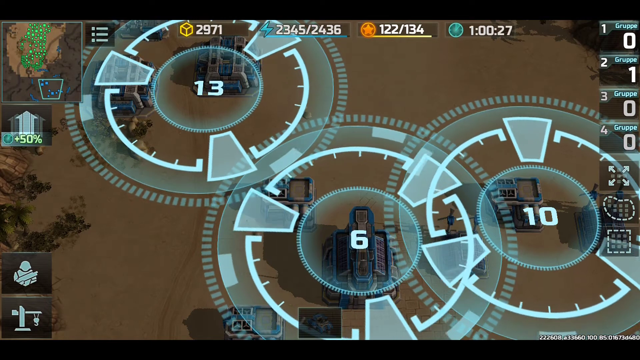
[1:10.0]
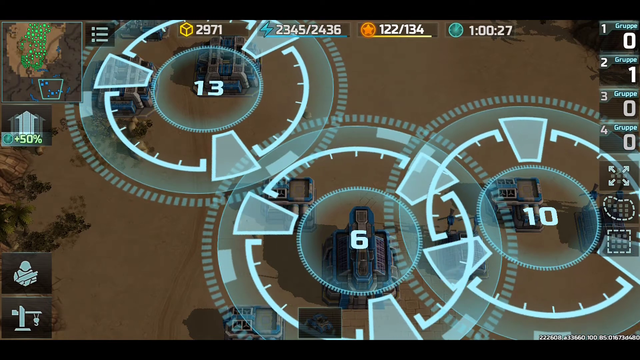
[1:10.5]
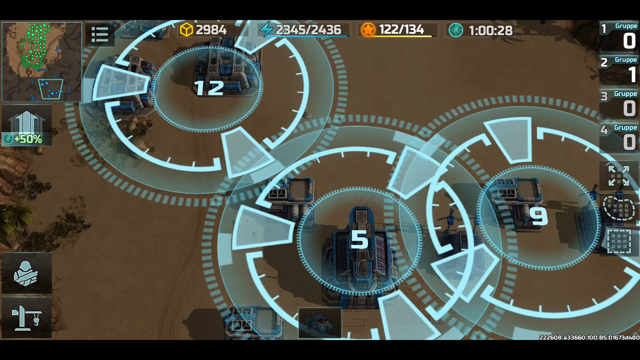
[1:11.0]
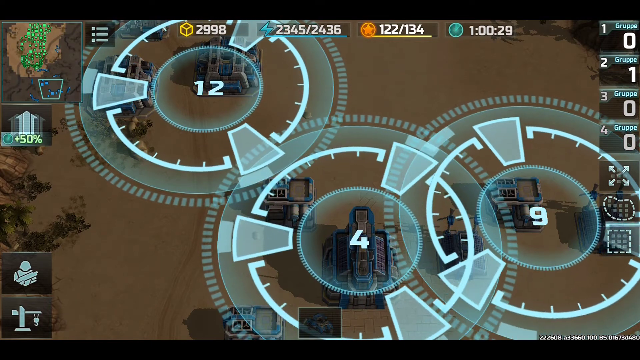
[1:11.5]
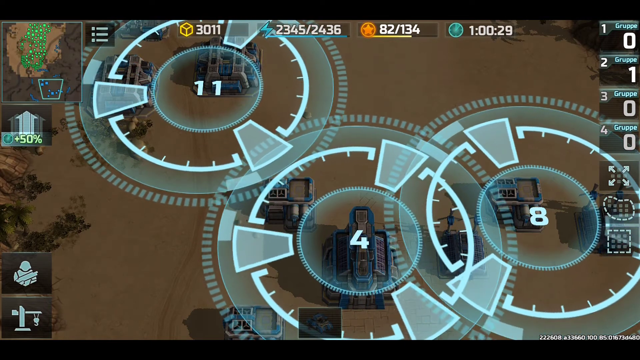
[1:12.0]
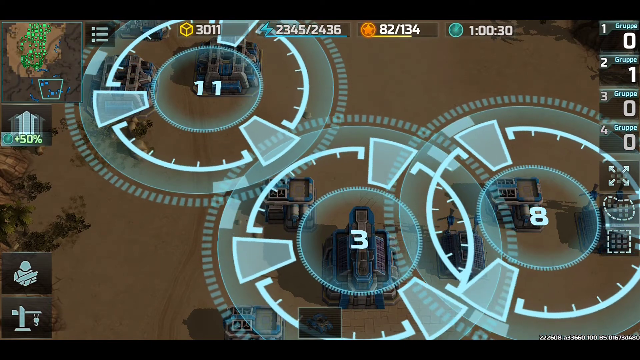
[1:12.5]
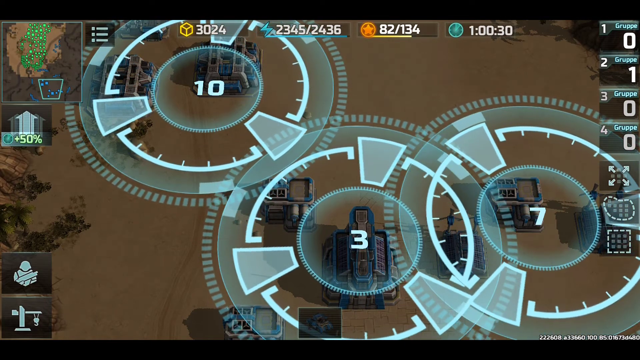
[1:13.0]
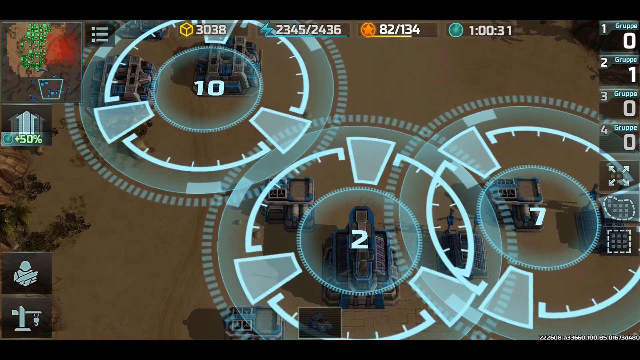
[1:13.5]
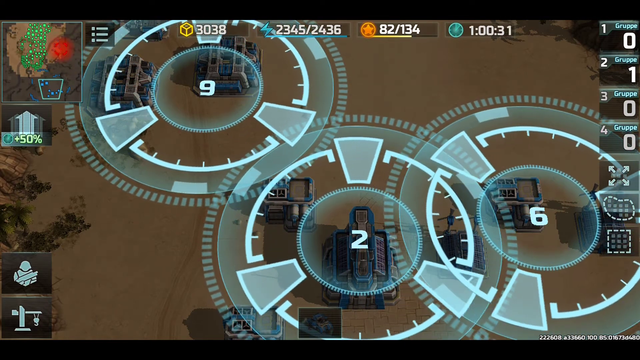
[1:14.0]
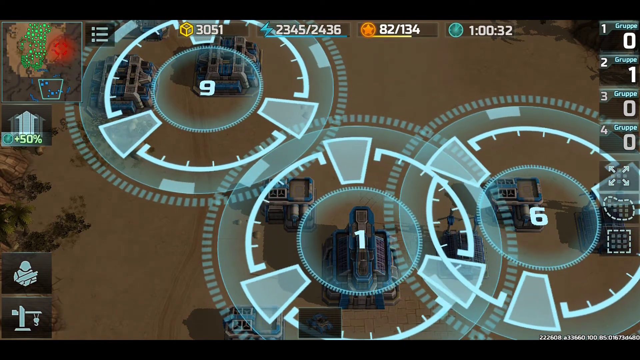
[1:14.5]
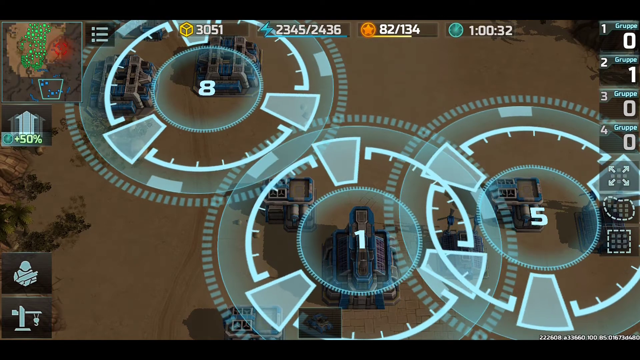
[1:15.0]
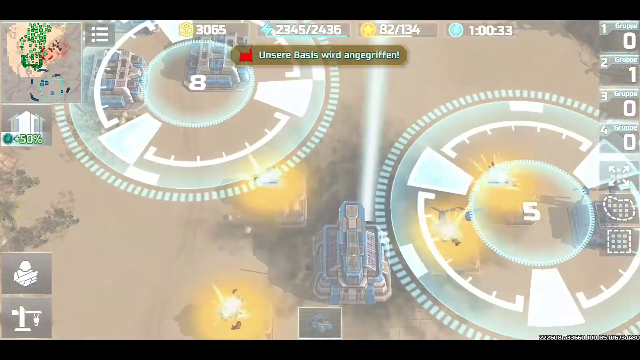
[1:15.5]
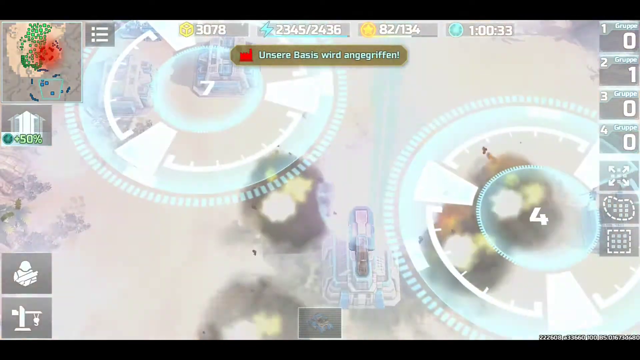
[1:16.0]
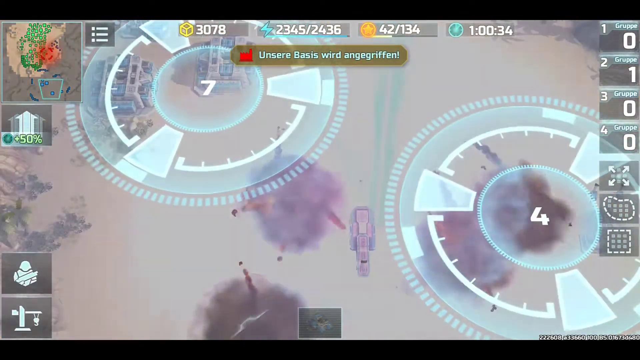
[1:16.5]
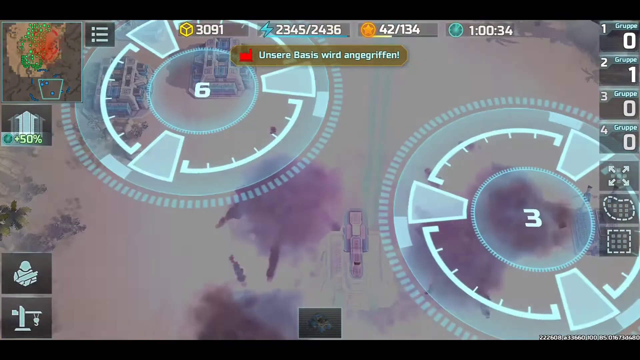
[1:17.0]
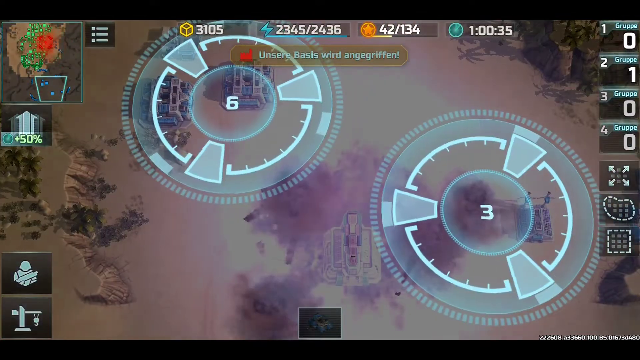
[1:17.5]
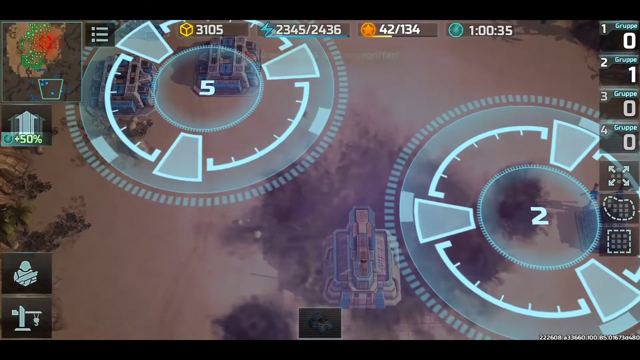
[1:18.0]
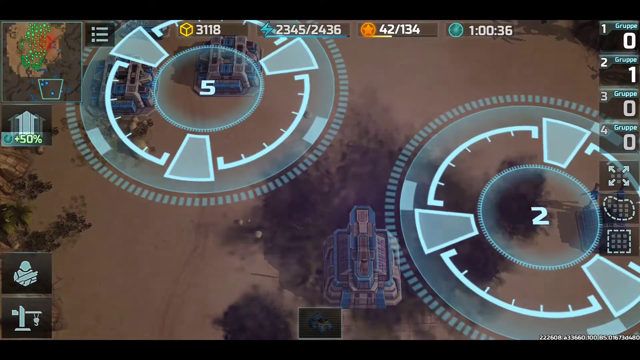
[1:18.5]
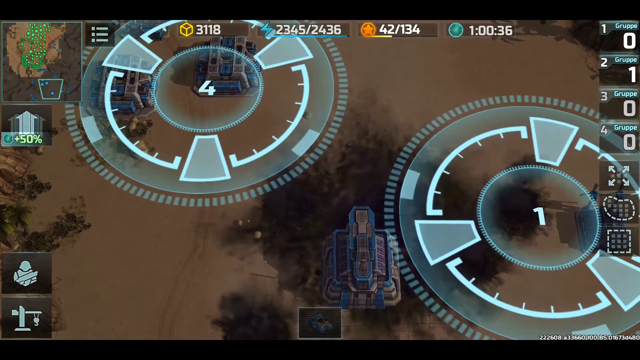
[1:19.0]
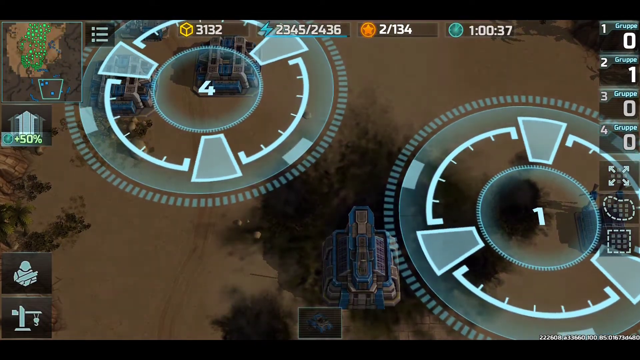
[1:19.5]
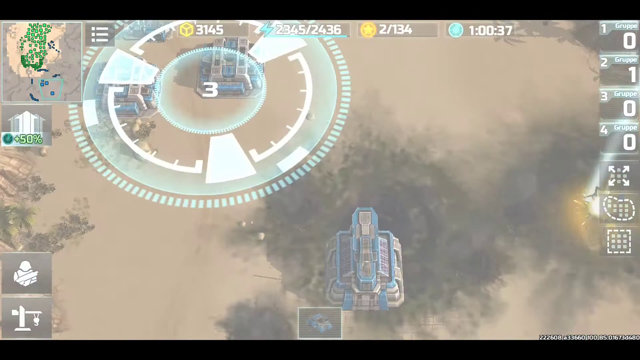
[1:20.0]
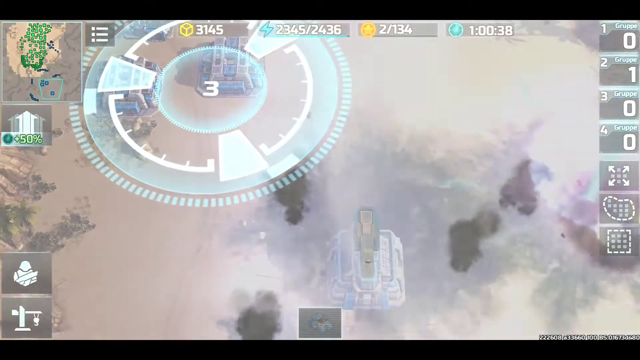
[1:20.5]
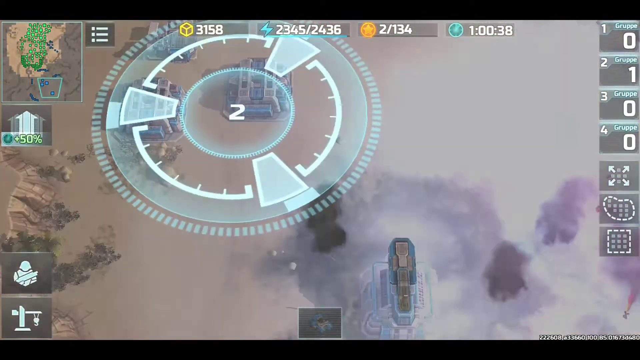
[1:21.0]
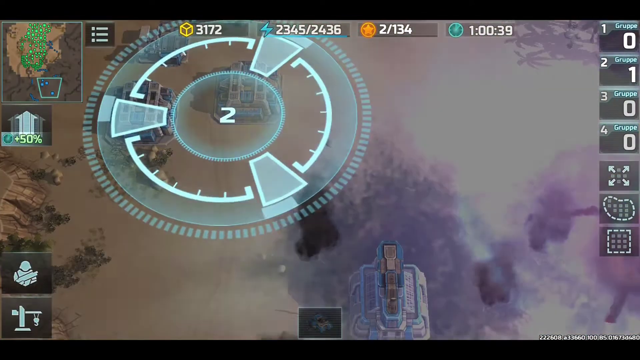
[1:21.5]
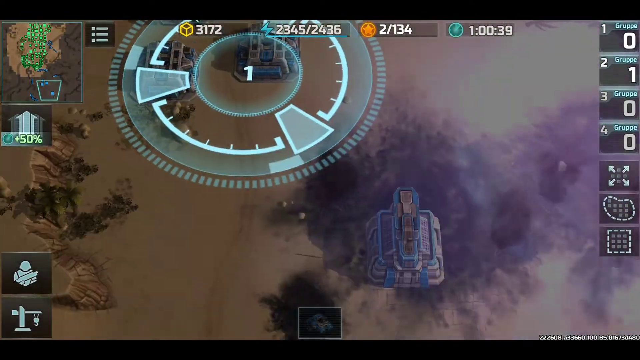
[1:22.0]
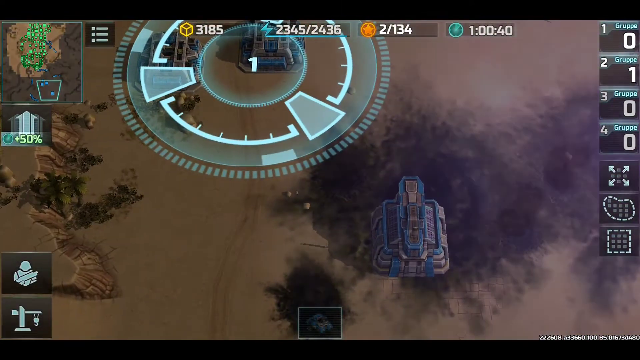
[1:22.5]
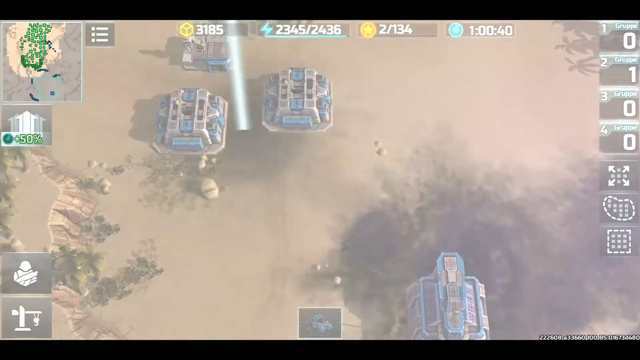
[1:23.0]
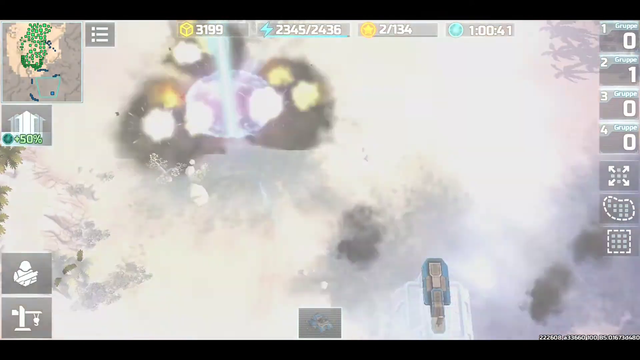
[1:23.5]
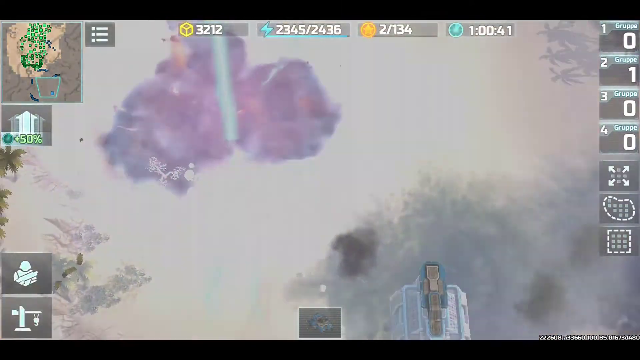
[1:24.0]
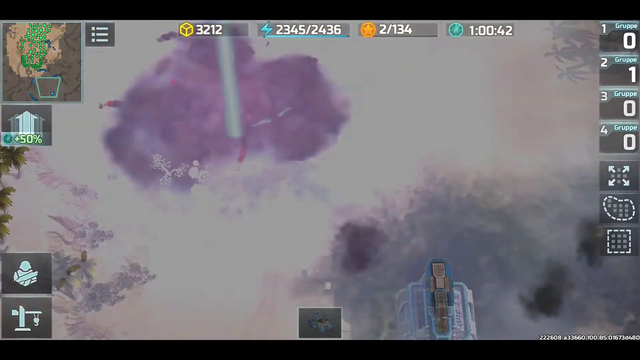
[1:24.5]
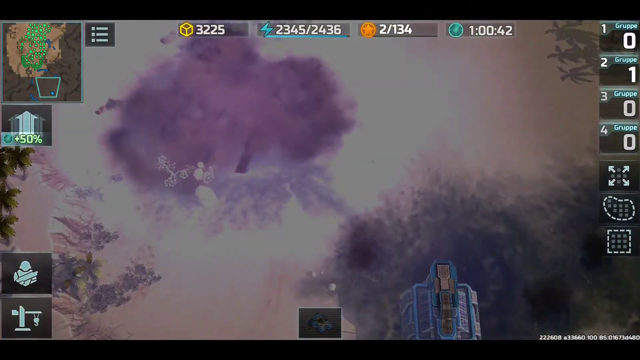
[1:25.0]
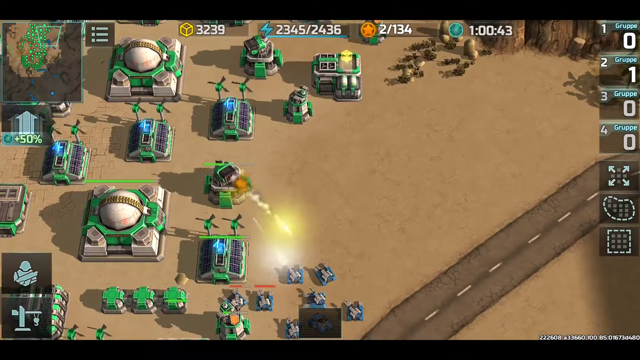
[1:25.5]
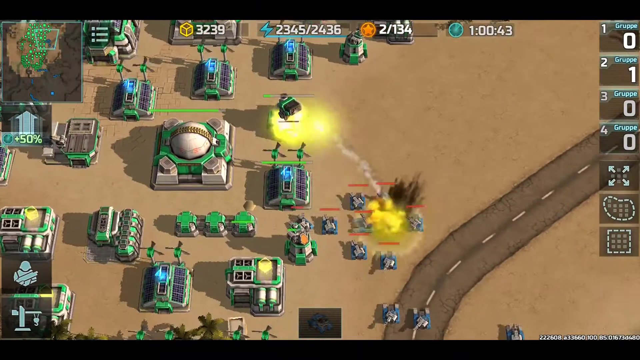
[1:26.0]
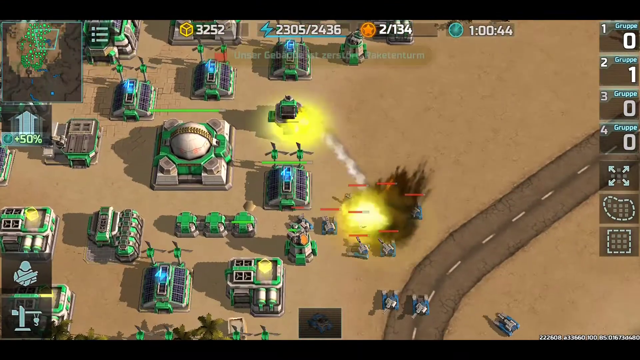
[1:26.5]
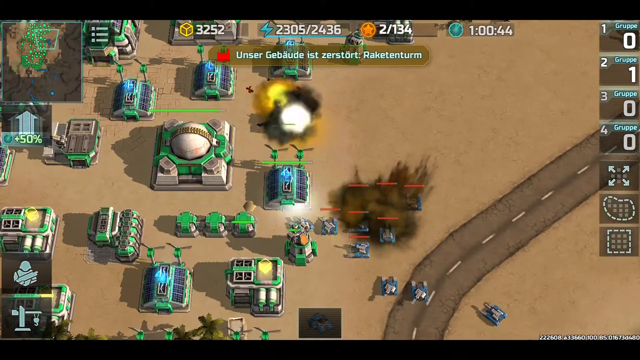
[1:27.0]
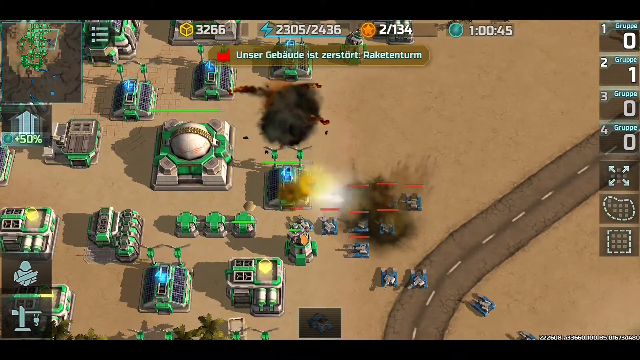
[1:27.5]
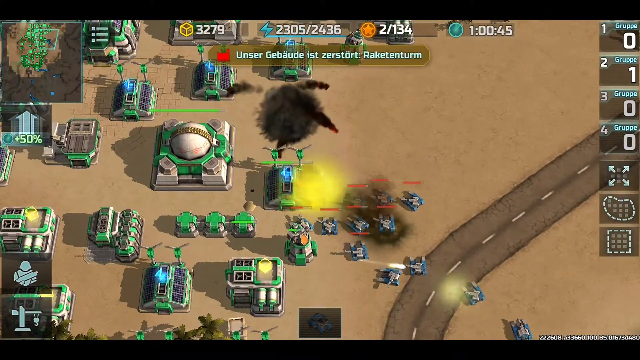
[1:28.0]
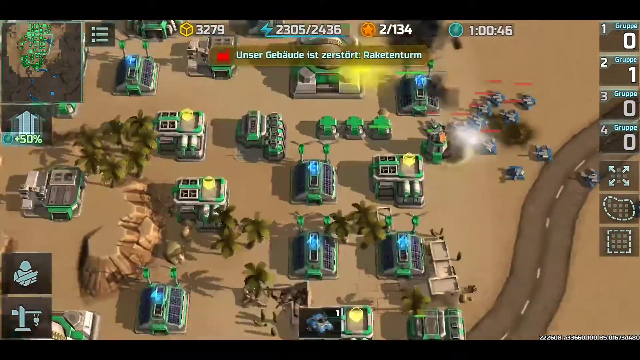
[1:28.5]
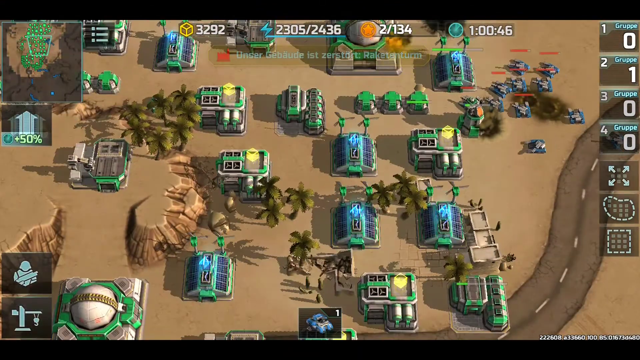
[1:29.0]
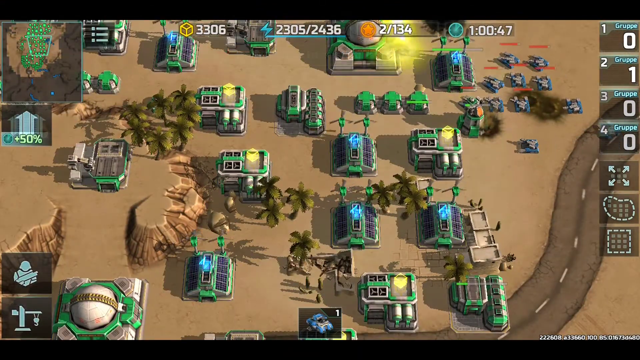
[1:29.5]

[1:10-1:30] Three dials with different numbers are on the playing field of the video game, with a war going on underneath them. The dials disappear, and ammunition flies through the air in a battle. There are war vehicles, explosions and gray smoke. The vehicles have propellers that are turning, and the houses look like they have almost windmills on top of them. A map in the upper left-hand corner shows explosions as they occur in real time on the playing field. There are a lot of army-type troops. A score is kept up top. The dials appear again, constantly turning, with numbers in the middle of each. The explosions continue; each time one occurs there is a little fire and then thick black smoke.